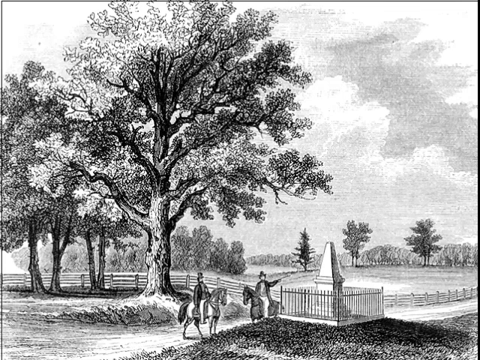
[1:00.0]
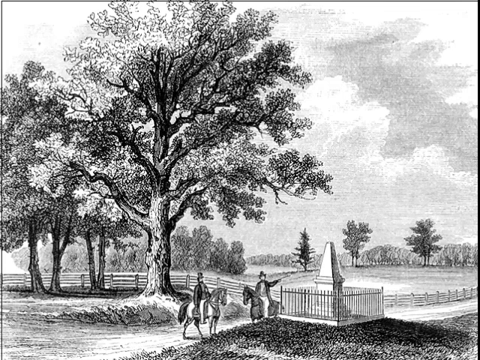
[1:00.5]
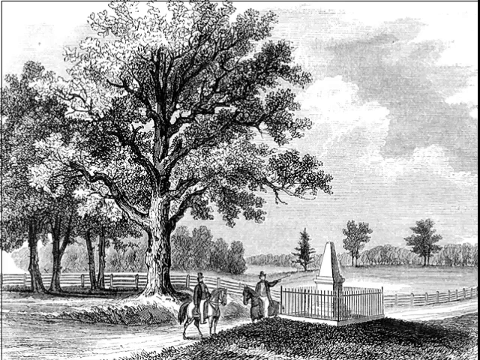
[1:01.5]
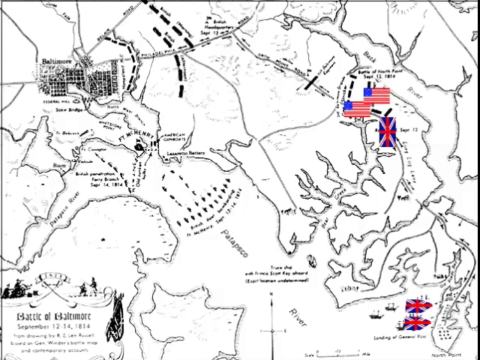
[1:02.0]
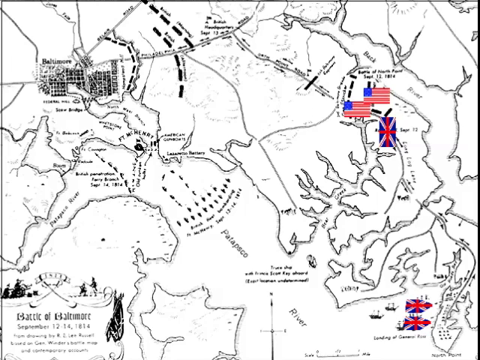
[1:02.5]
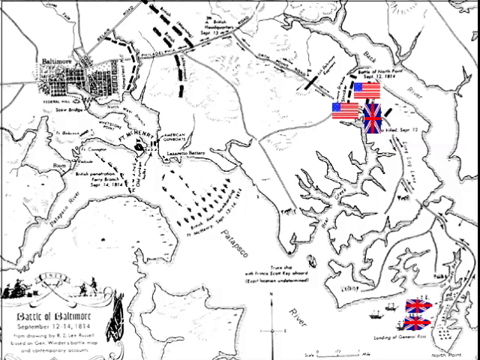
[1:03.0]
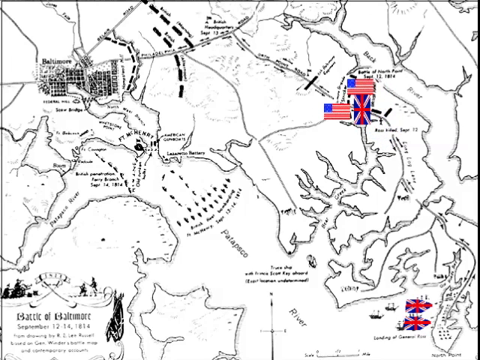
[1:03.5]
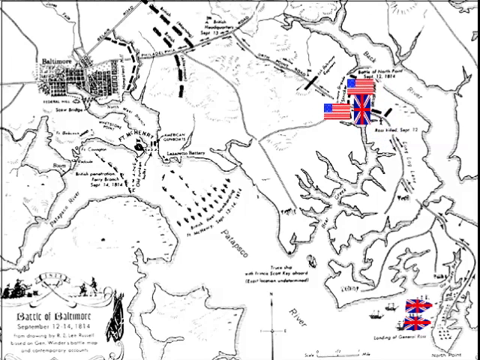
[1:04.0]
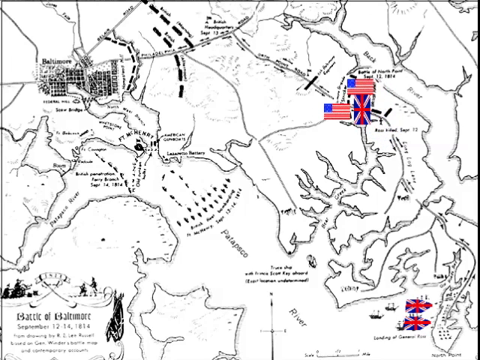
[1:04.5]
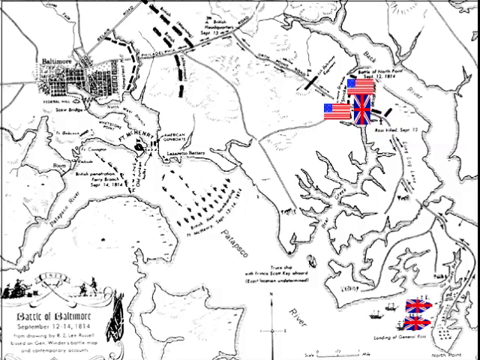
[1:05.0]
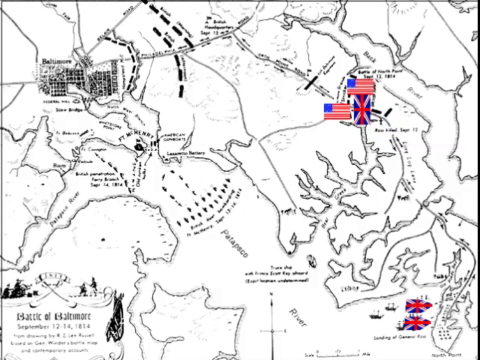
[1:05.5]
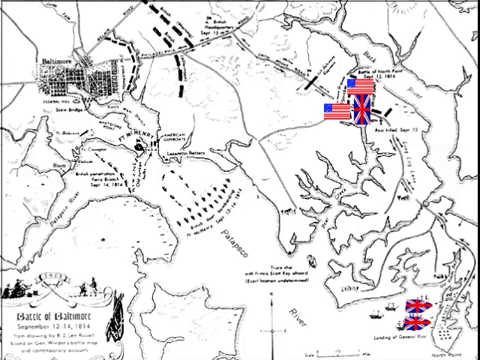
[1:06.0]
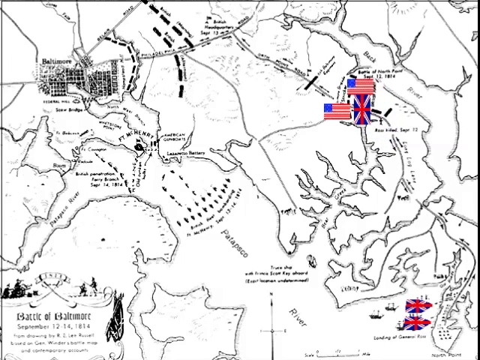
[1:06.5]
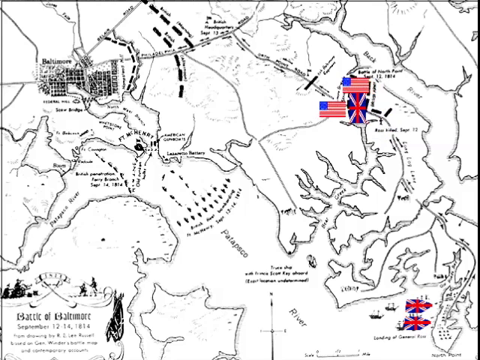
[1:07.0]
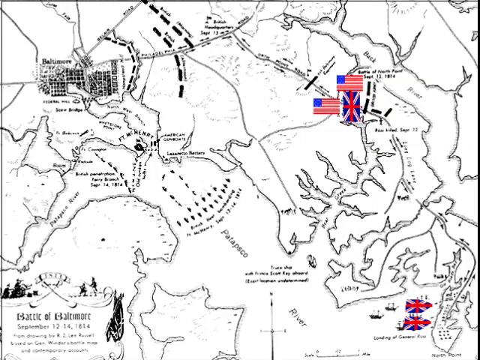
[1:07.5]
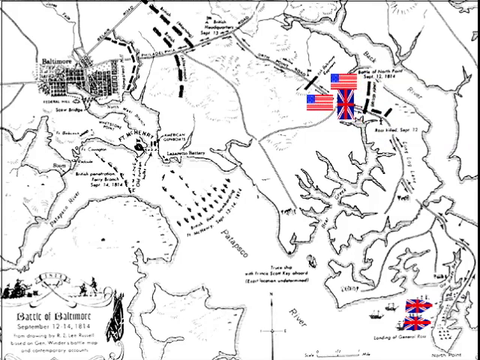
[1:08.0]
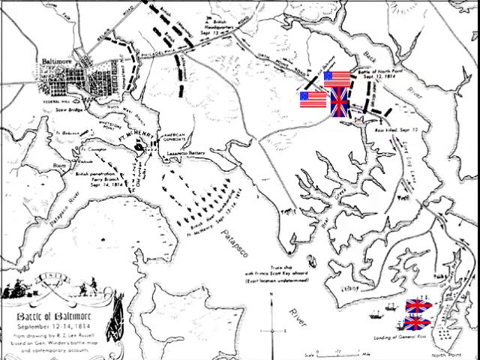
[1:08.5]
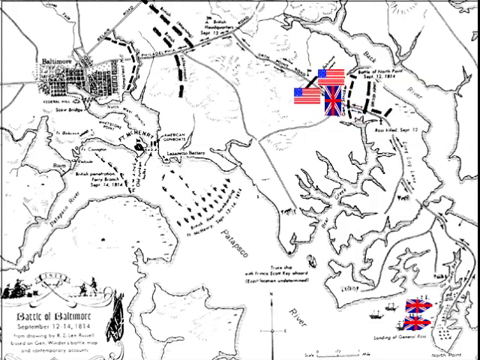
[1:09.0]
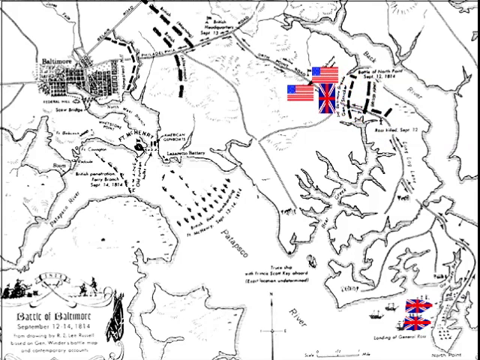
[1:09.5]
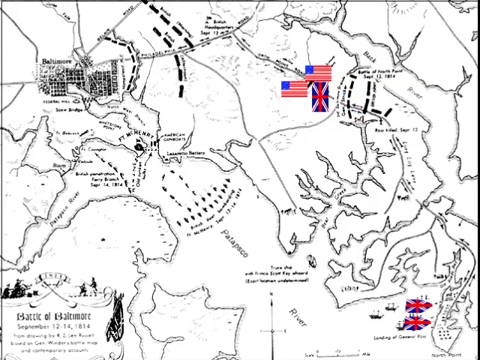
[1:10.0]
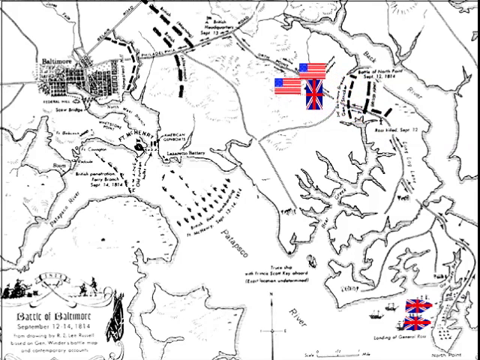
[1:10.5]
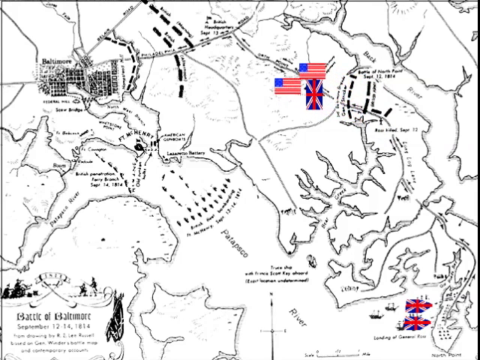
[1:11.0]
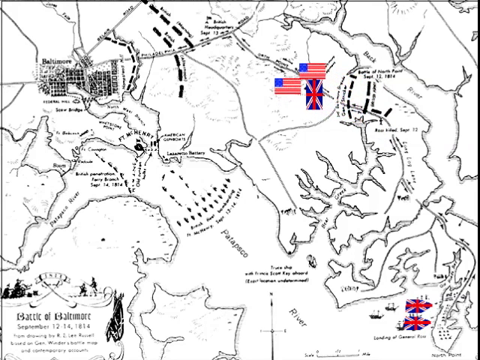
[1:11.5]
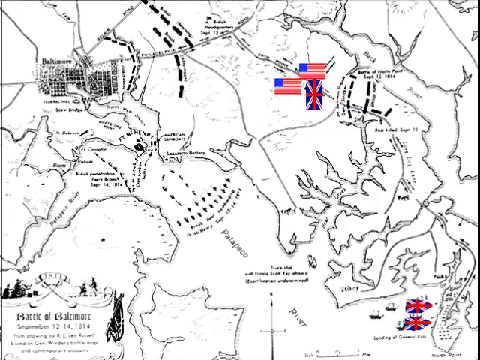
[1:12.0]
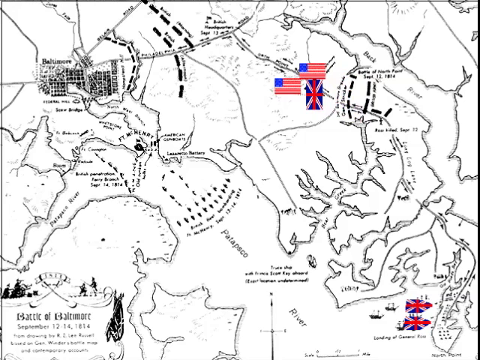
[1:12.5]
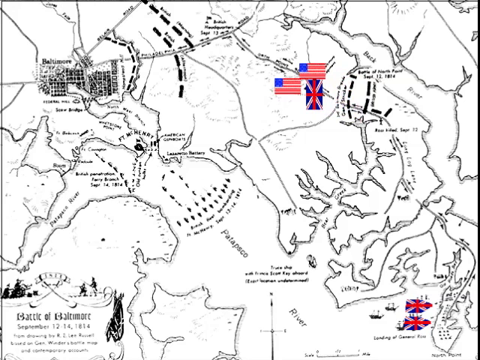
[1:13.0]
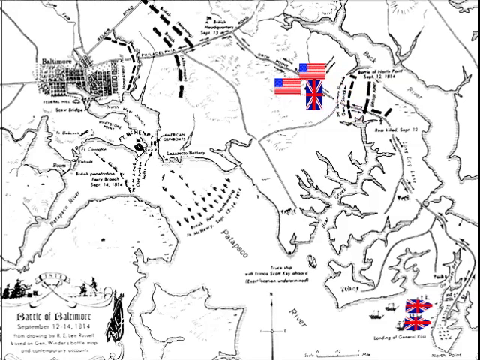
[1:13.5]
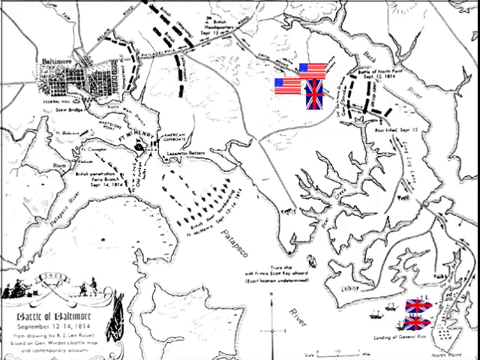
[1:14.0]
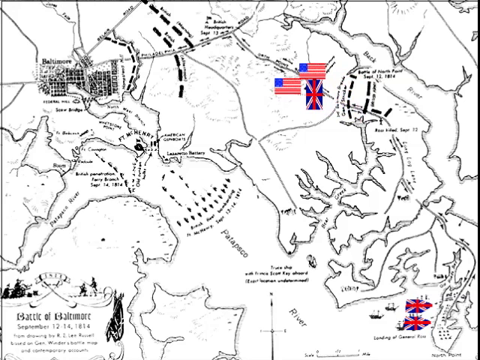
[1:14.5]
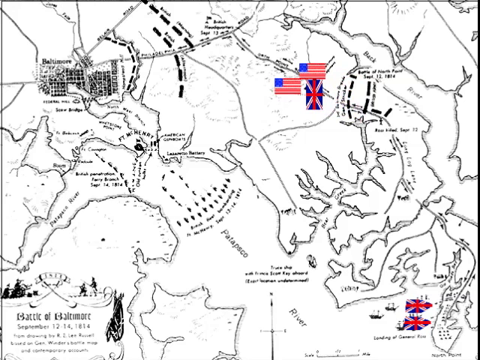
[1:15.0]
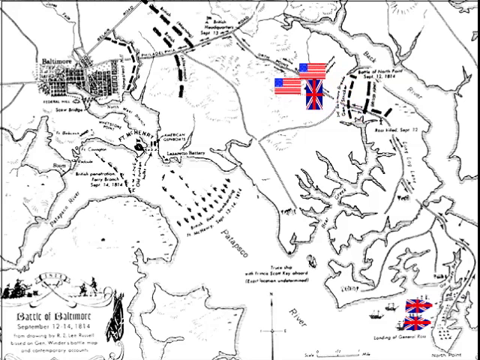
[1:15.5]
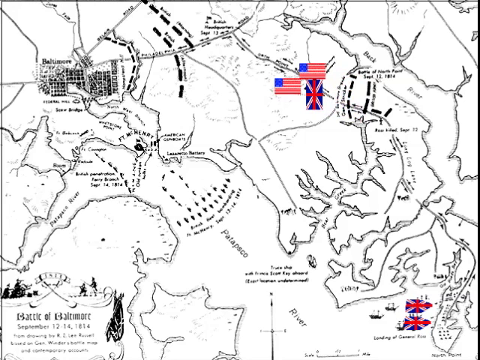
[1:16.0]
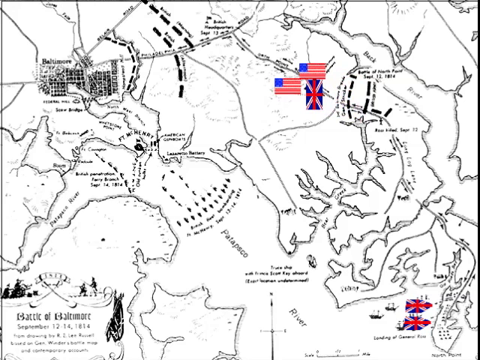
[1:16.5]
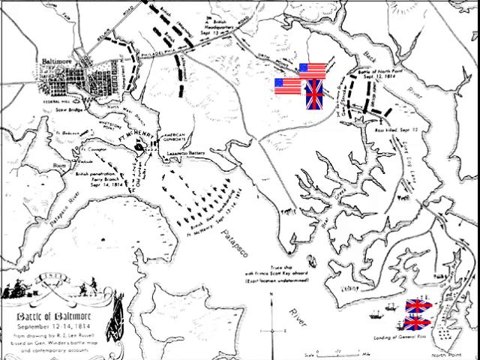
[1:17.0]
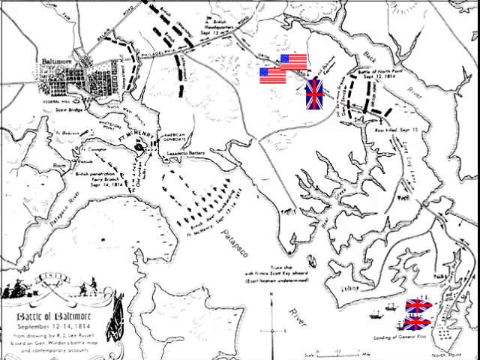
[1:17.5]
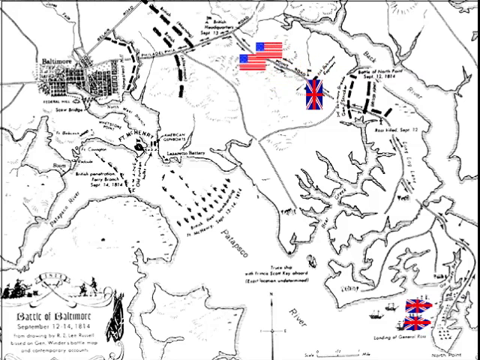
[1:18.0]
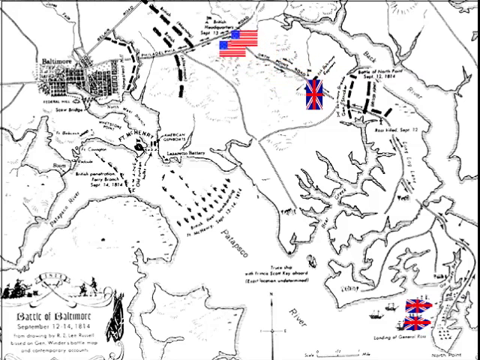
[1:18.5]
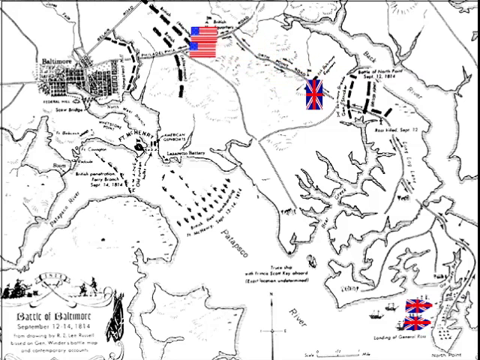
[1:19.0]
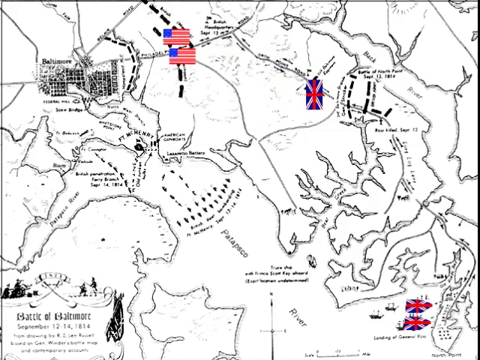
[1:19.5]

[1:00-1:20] An overhead view shows a map of where the Battle of Baltimore took place, with a waterway and branches that extend inland. A flag of Great Britain moves across the land, apparently north, meets up with two American flags, and pushes them further north. At the bottom right, just off the coast, are two more British flags. The British flag keeps pushing the two American flags north until they appear to stop resisting and retreat on their own. The map appears to depict Great Britain pushing U.S. forces back until they retreat quite far away, with the battle depicted by flags of Great Britain and of the United States.